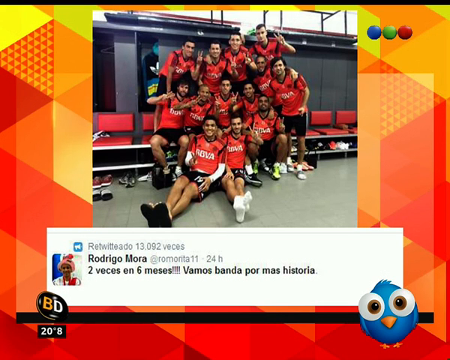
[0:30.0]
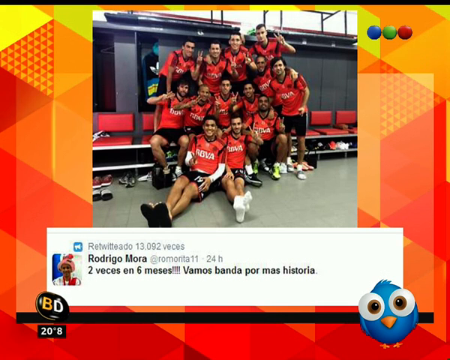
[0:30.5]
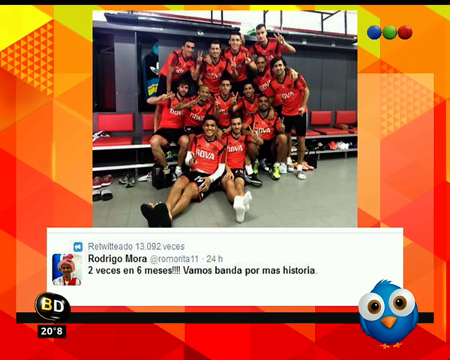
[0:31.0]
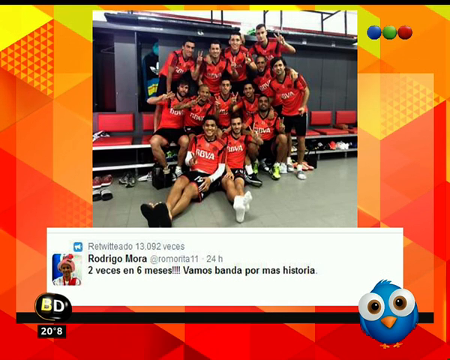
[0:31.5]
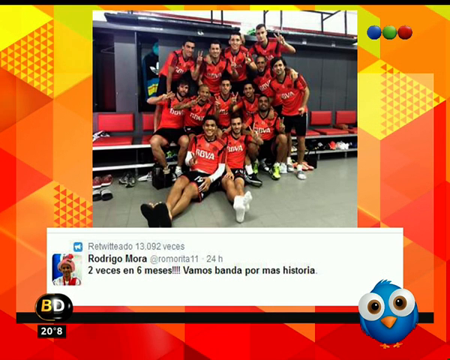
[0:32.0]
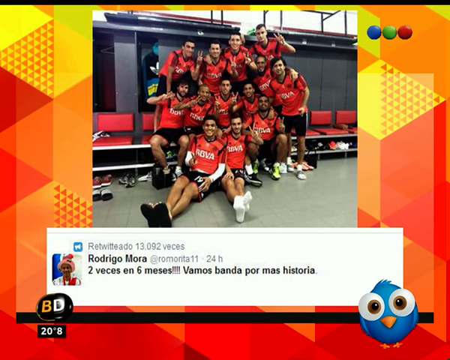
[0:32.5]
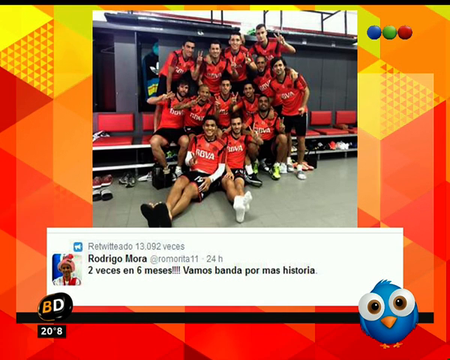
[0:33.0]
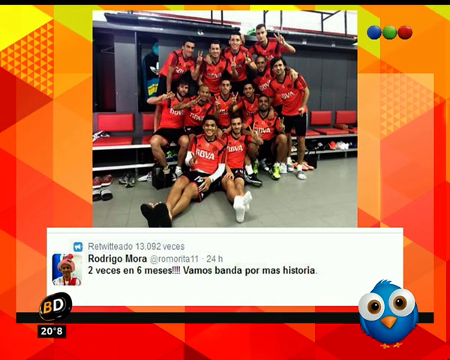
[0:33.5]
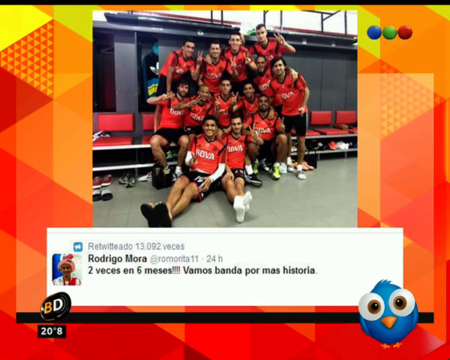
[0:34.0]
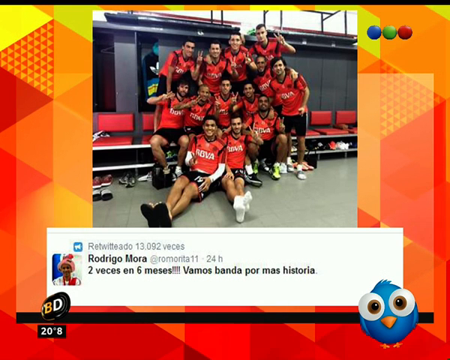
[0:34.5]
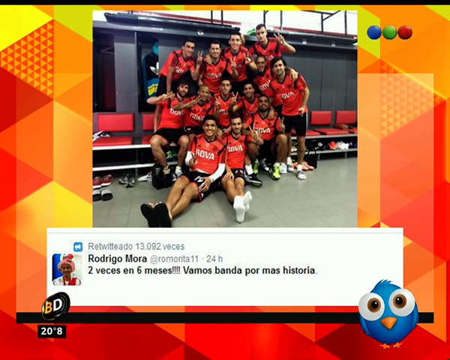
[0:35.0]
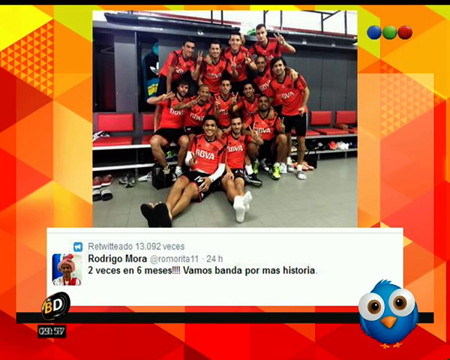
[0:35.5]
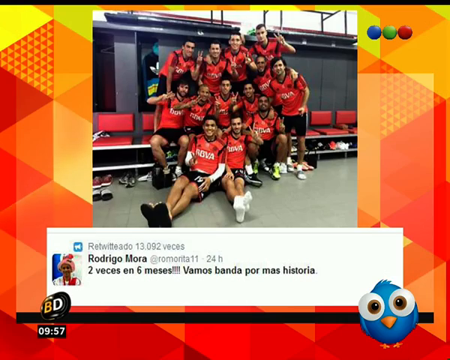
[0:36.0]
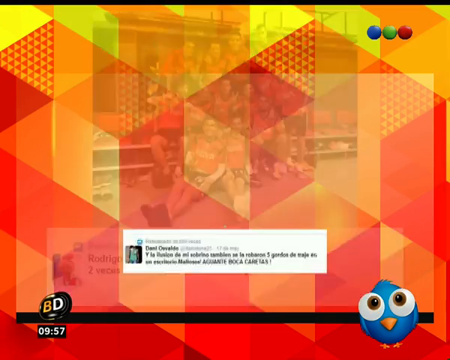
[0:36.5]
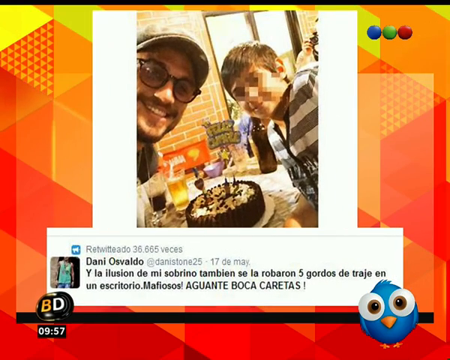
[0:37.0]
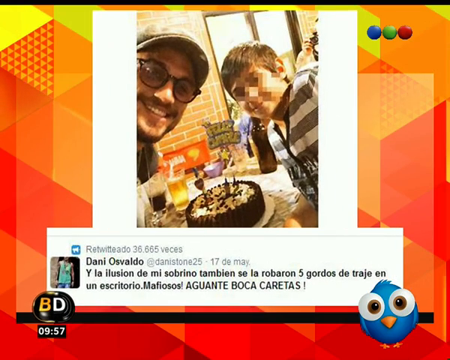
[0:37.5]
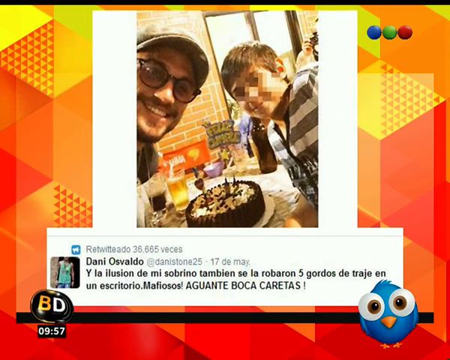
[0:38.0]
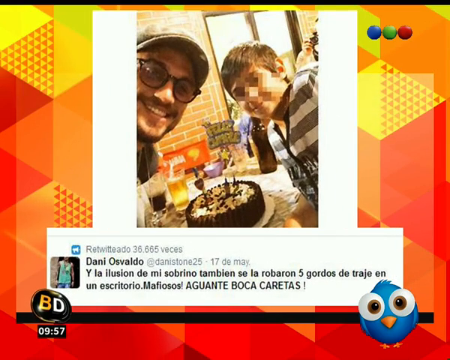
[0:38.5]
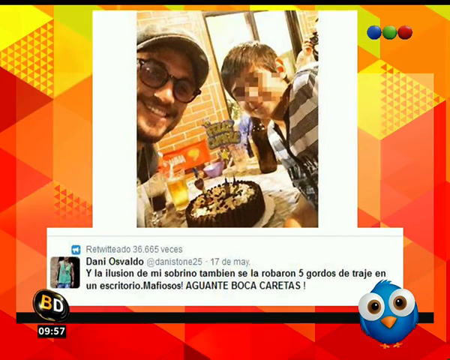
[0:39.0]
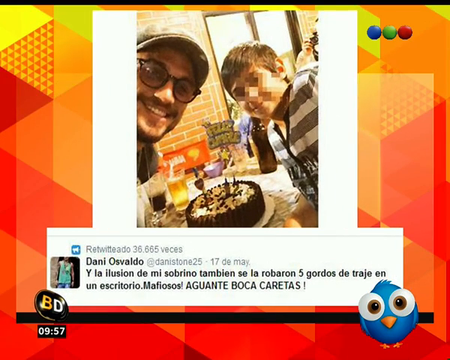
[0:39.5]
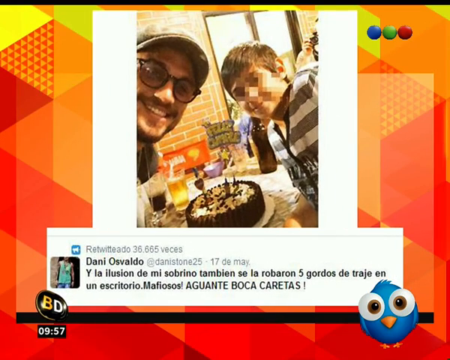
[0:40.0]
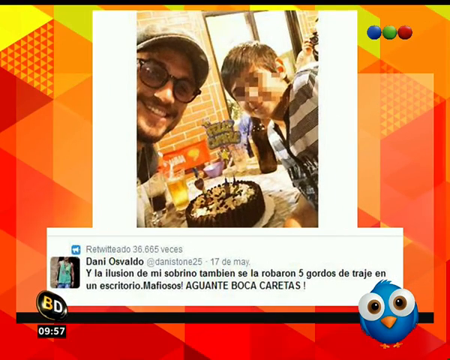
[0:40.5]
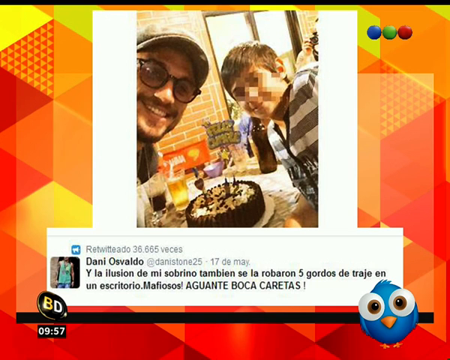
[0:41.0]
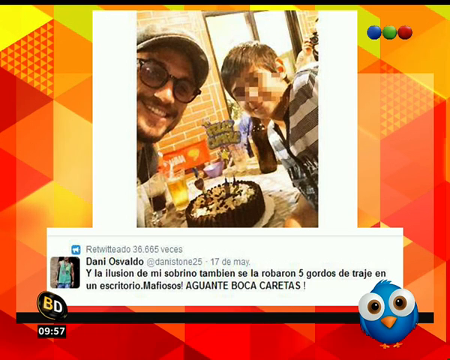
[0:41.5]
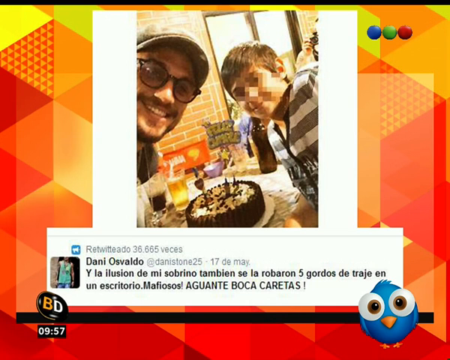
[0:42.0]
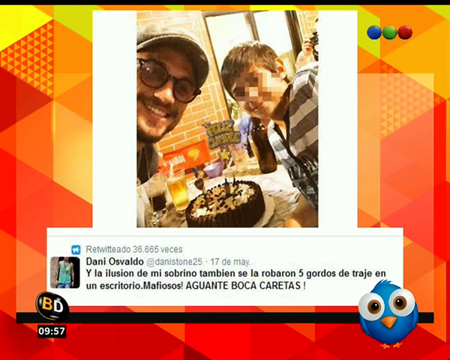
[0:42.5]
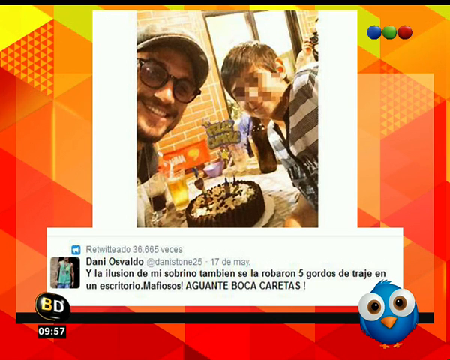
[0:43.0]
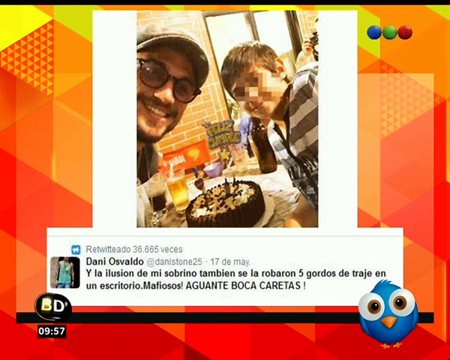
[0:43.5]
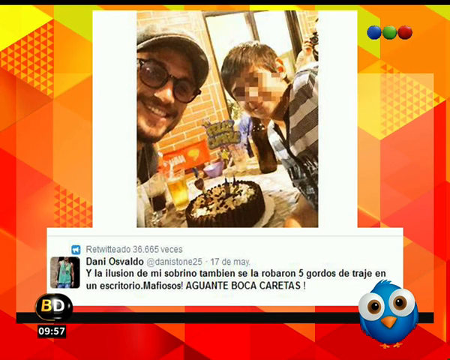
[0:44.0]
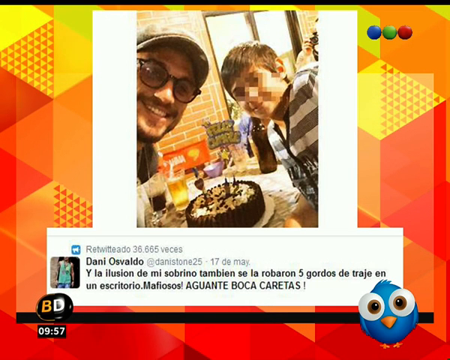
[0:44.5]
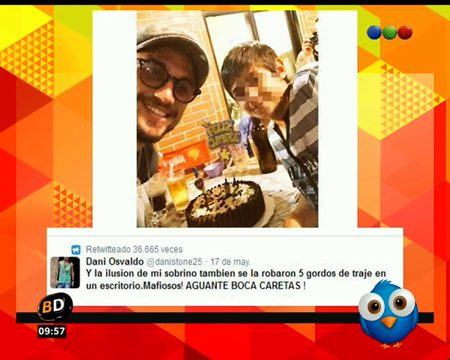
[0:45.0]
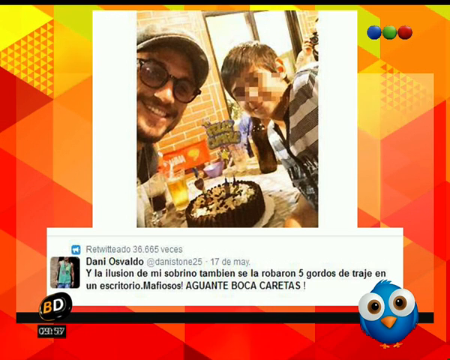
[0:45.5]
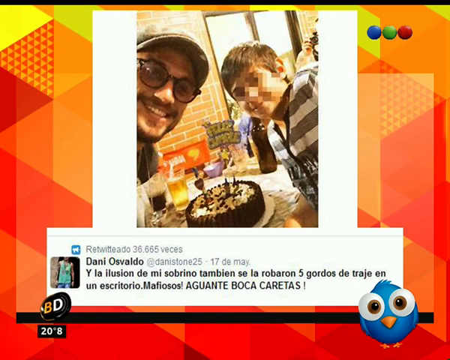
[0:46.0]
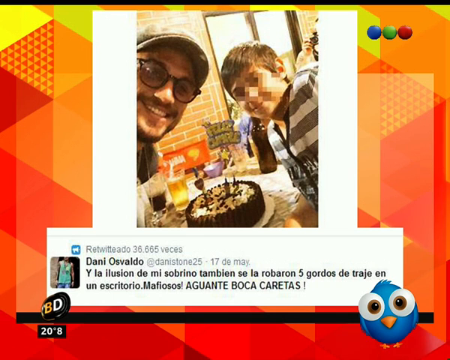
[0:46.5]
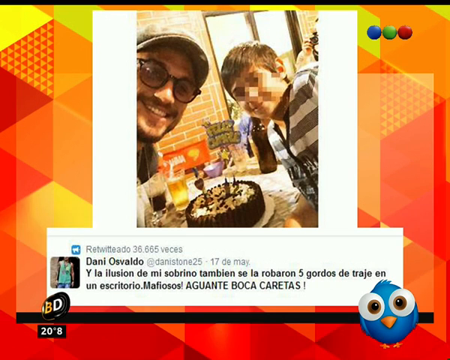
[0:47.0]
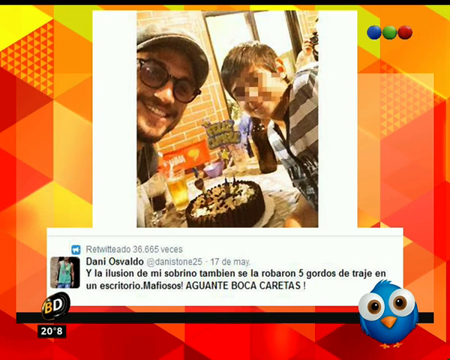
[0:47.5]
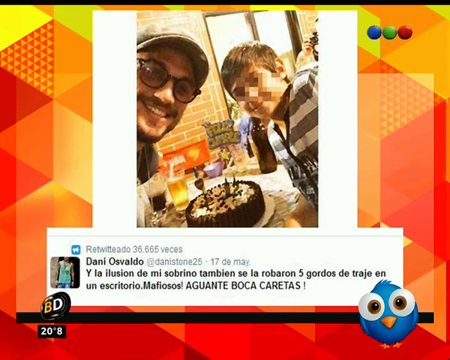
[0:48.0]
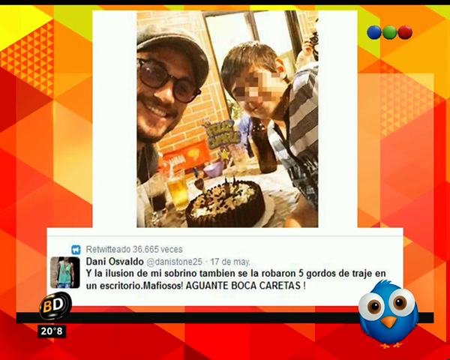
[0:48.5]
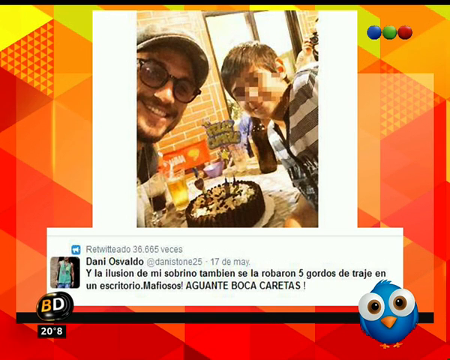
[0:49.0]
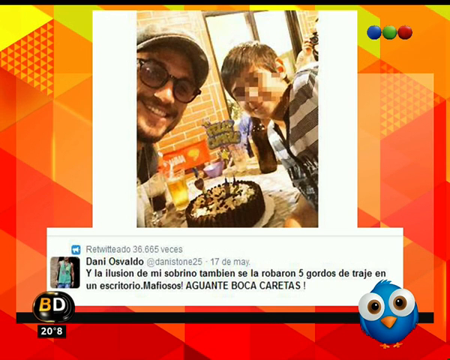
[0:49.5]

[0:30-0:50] A picture shows 13 men sitting in a room that looks like a locker room. They wear red and black uniforms, and their shirts say "Rova" in white. Some have shoes on and some are in their socks. The background is yellow and red, and the locker area has a black wall. They pose for the picture with their fingers in the air. Three dots, blue, green and red, are at the top right. Next is a picture of a man with a young boy whose face is blurred out. The man wears a hat and eyeglasses. There is a chocolate cake with white, and drinks are on the table. Text reads "Feliz Cumpleaños," indicating someone's birthday, along with a post from Danny Osvaldo at Danny Stone 25 dated the 17th of May and some text in Spanish. The BD logo is on the left, and there is a blue bird with a yellow beak, white eyes and brown inside them. The two pose by the cake, looking at the camera. The view then returns to the boys in the locker room posing with fingers in the air, some holding up two fingers and some one, all smiling toward the camera.